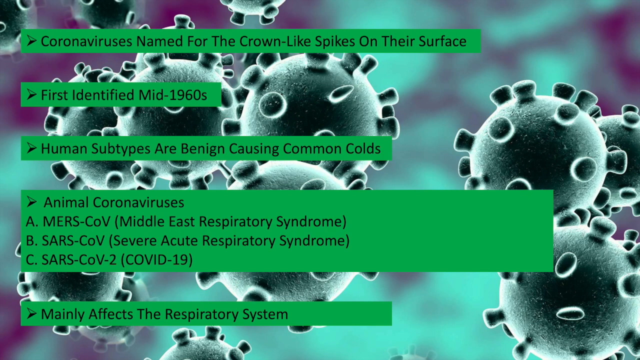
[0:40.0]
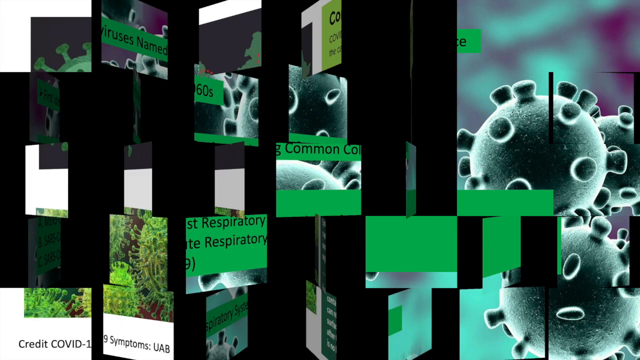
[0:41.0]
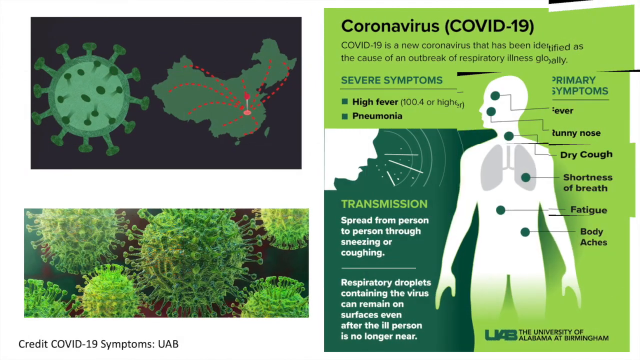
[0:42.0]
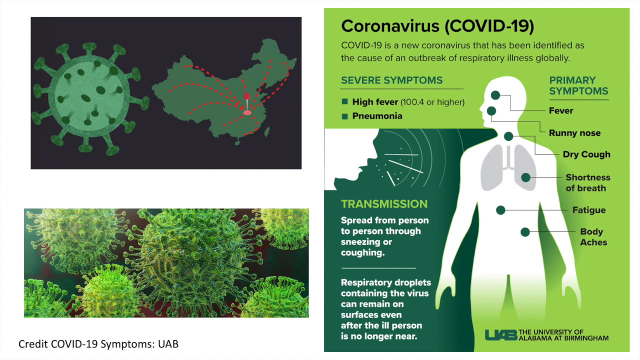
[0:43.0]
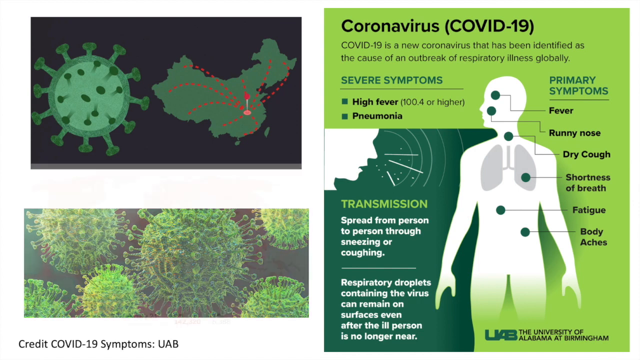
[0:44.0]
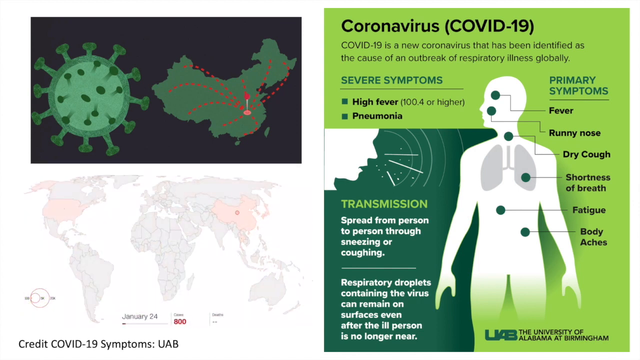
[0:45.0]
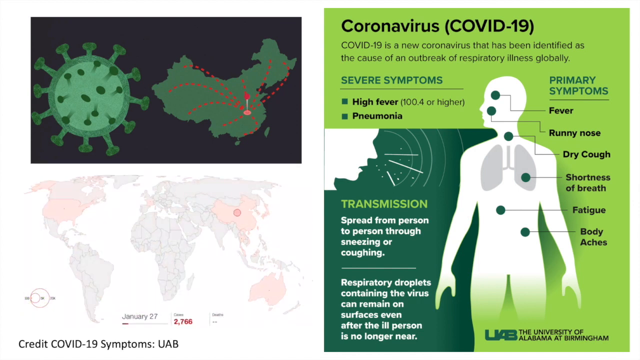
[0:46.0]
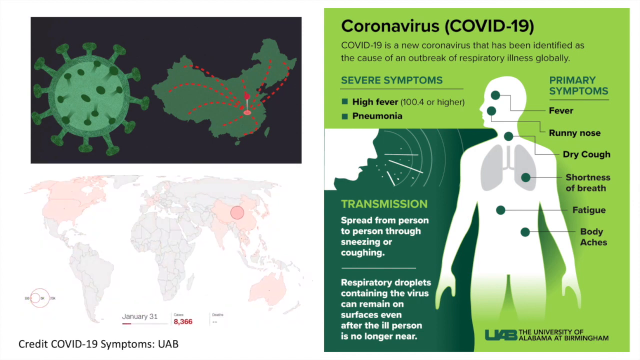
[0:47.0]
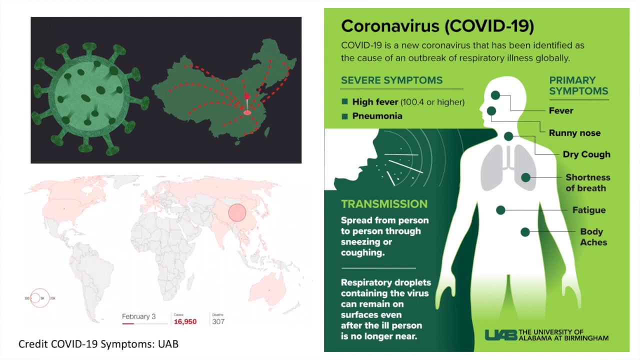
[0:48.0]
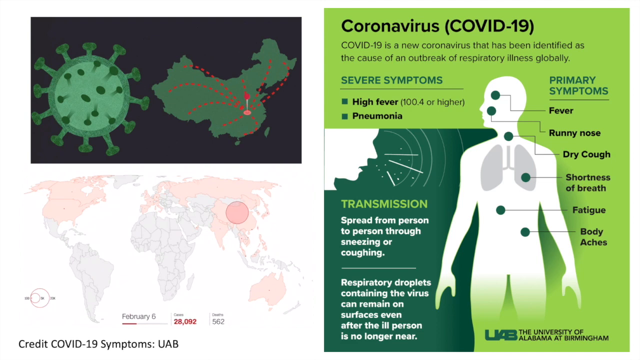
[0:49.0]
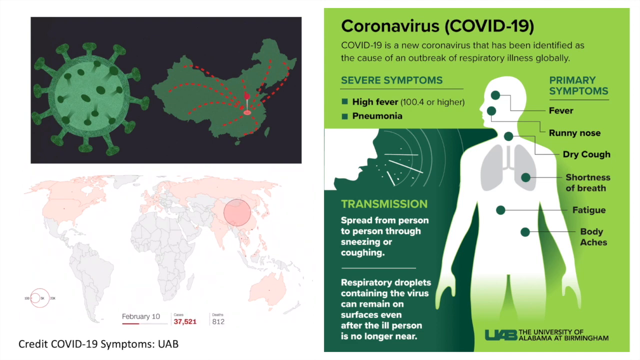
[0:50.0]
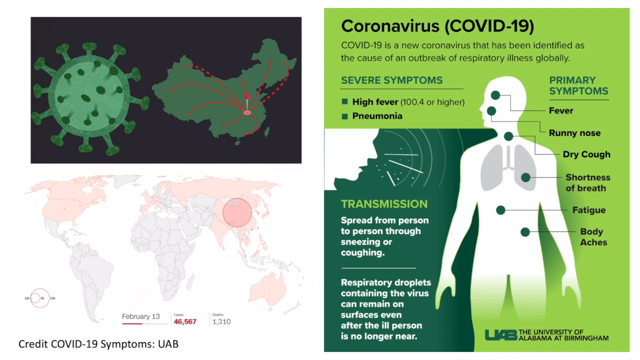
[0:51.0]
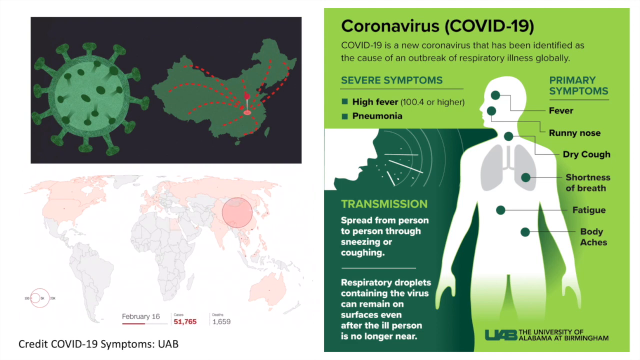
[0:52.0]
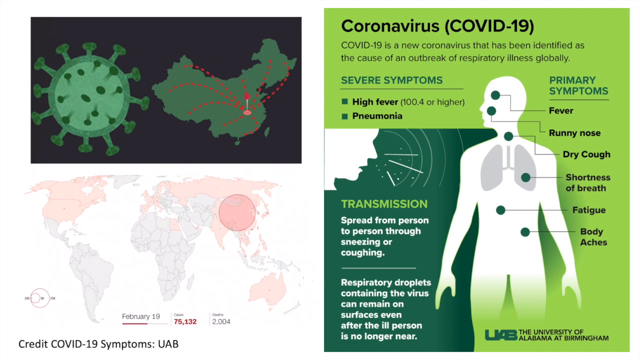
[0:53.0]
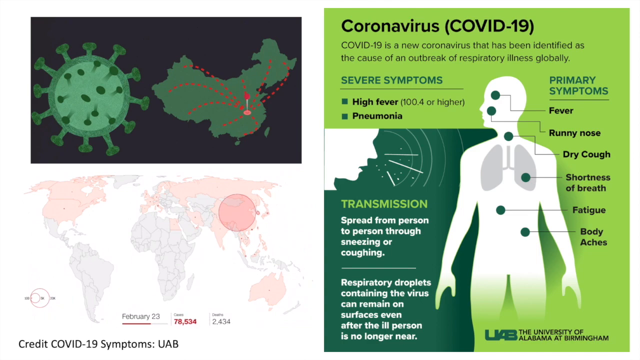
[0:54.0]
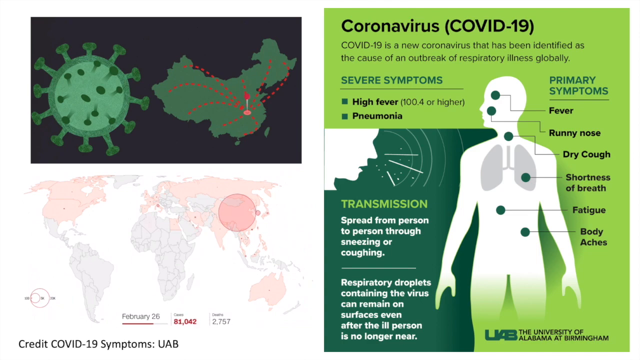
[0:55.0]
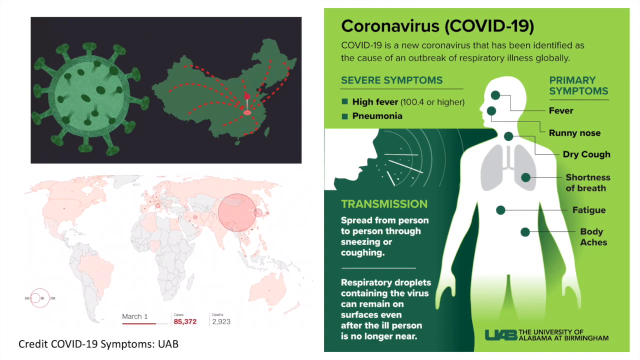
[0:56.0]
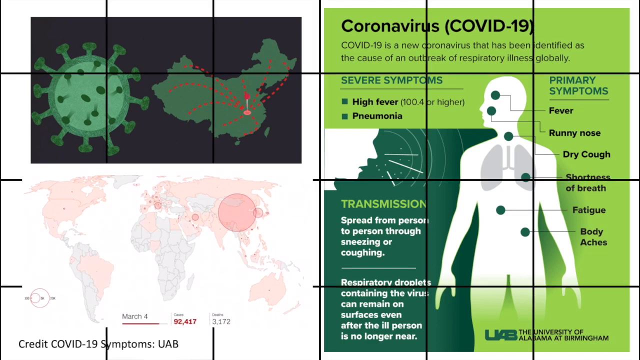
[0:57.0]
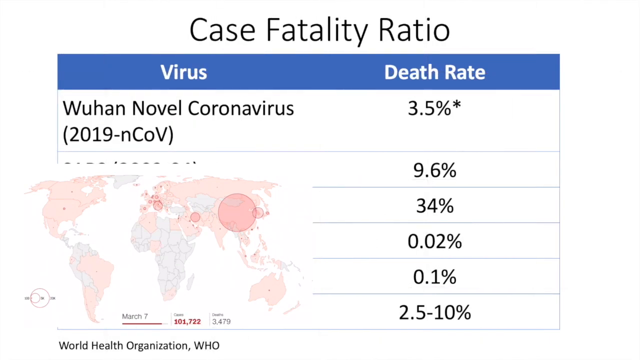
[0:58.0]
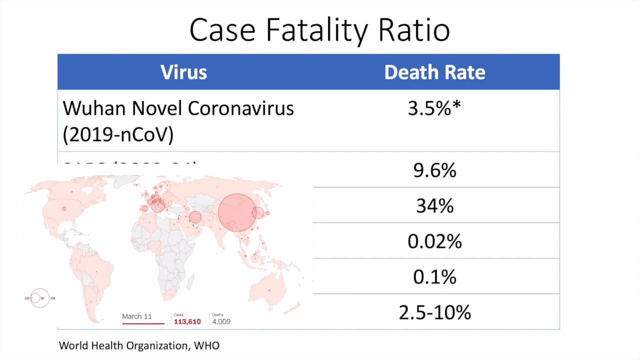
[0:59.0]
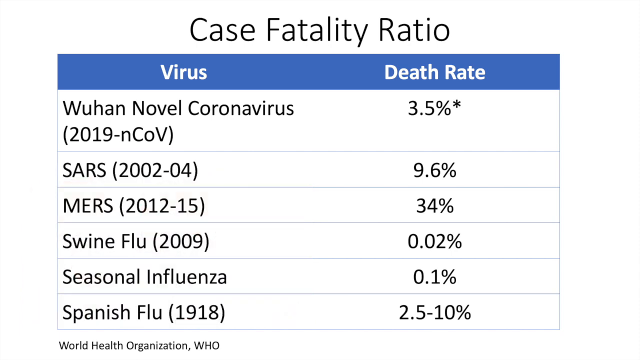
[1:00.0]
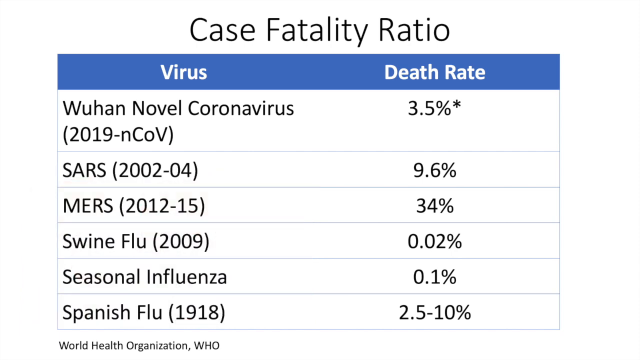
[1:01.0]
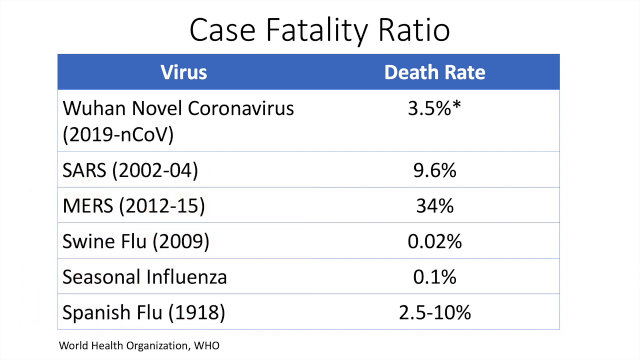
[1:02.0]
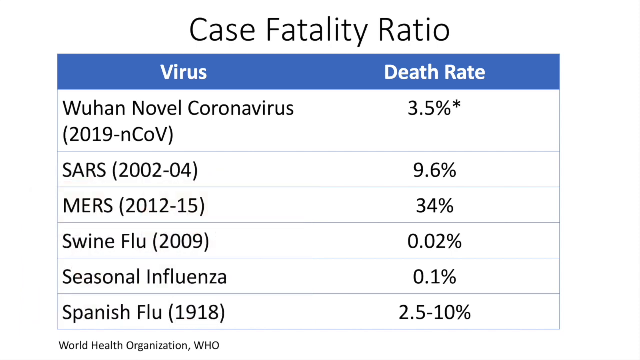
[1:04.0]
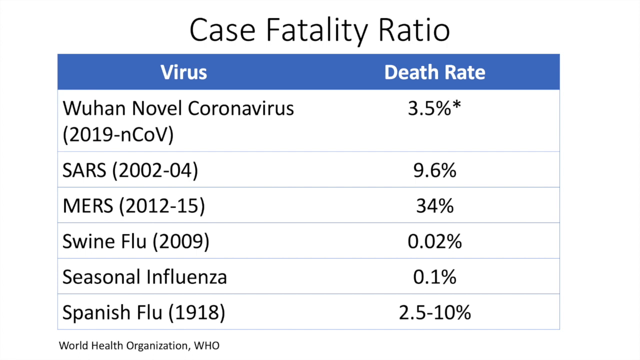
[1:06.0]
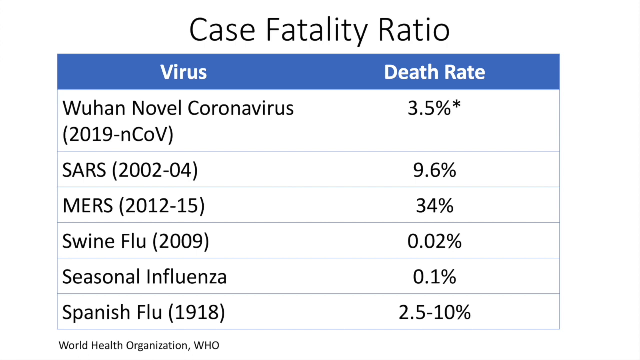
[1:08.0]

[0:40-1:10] The background changes to green and purple. The screen shows text in black print, with each sentence set in a green rectangle. The first line reads "coronavirus is named for the crown-like spikes on their surface". Below it is "first identified in the mid-1960s", then "human subtypes are benign, causing common colds", and then "animal coronaviruses, MERS-CoV, Middle East Respiratory Syndrome, SARS-CoV, Severe Acute Respiratory Syndrome, and SARS-CoV-2, COVID-19". The final set of words states that it protects the respiratory system. The picture also contains multiple images of the COVID-19 virus, this time round with appendages poking through their outer shell. They are green, and with a white light shining above them, a pattern of white shows around the top and bottom of the viruses.